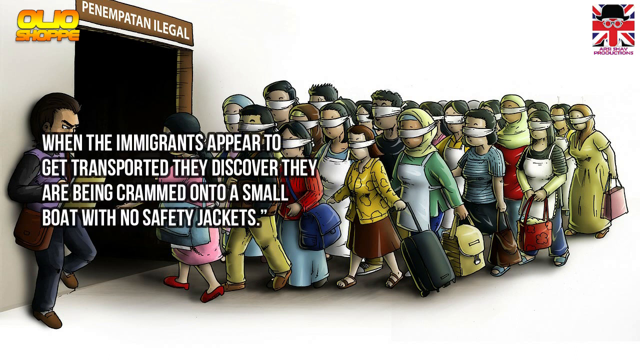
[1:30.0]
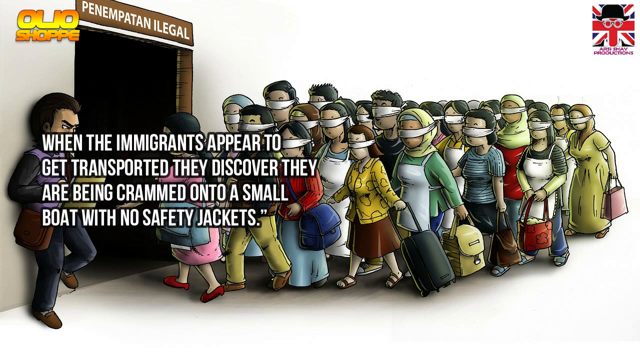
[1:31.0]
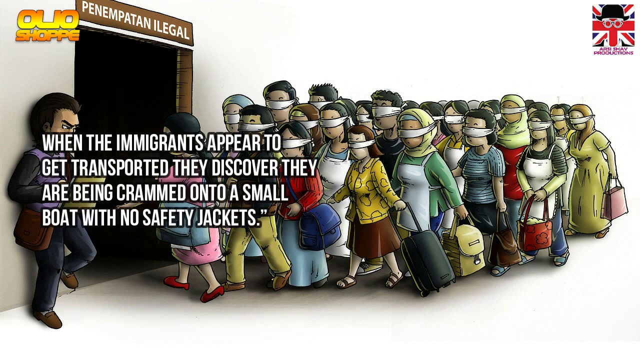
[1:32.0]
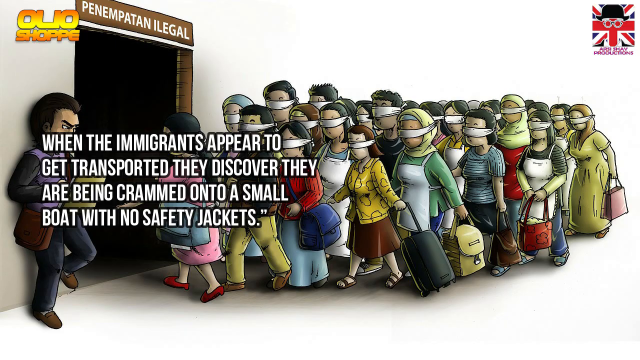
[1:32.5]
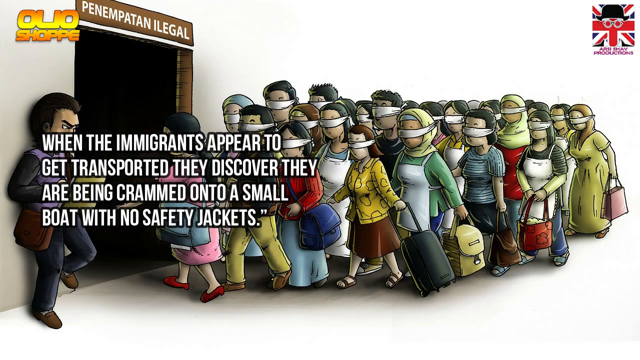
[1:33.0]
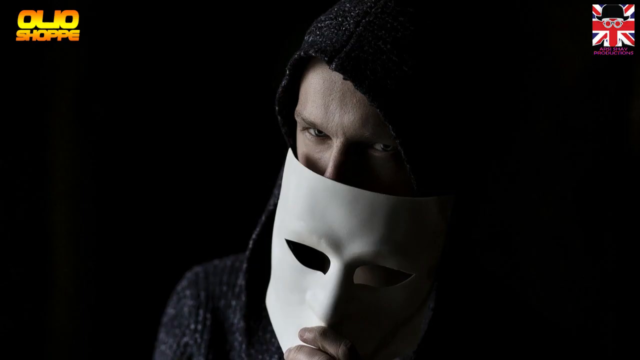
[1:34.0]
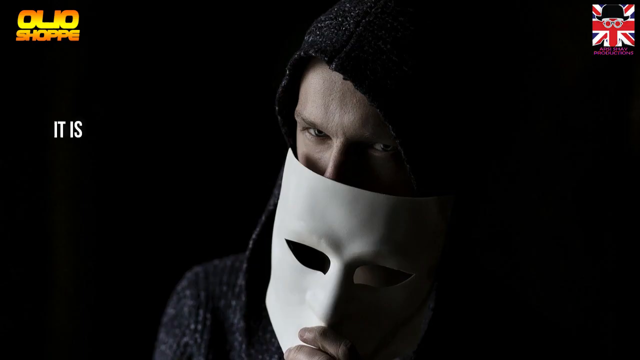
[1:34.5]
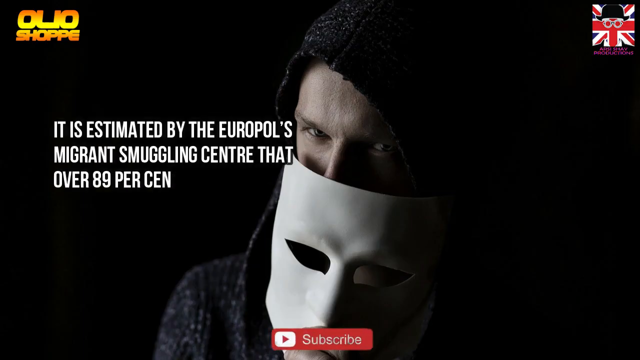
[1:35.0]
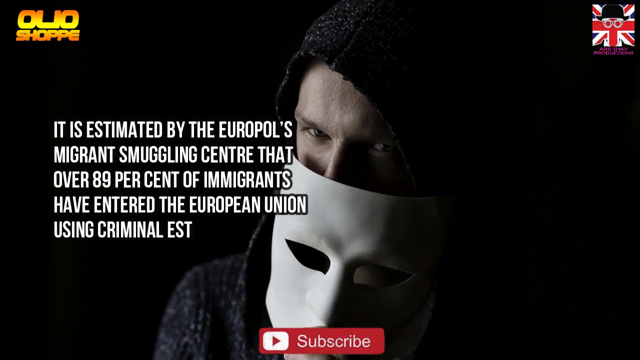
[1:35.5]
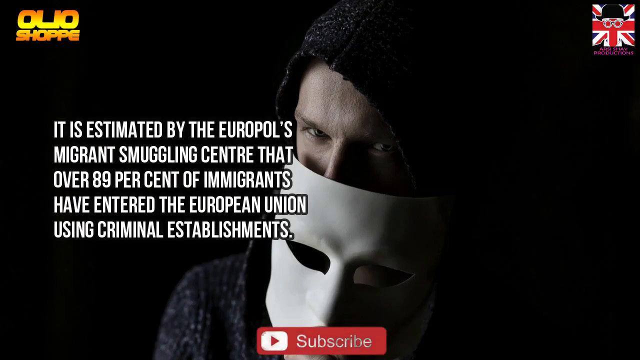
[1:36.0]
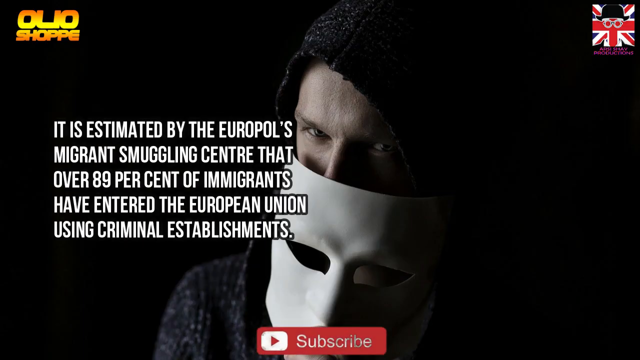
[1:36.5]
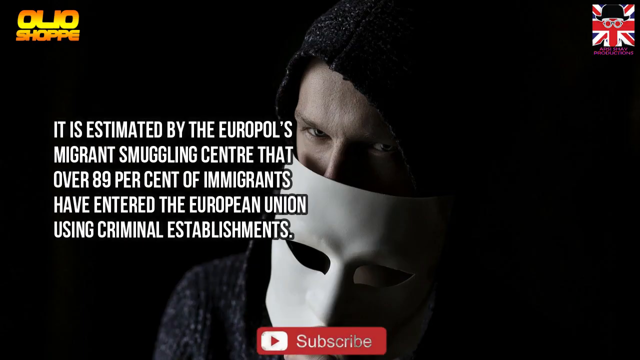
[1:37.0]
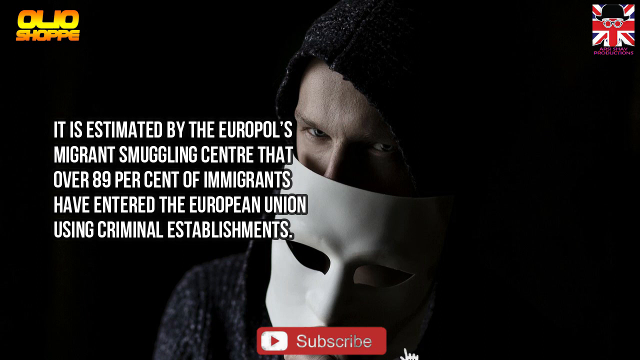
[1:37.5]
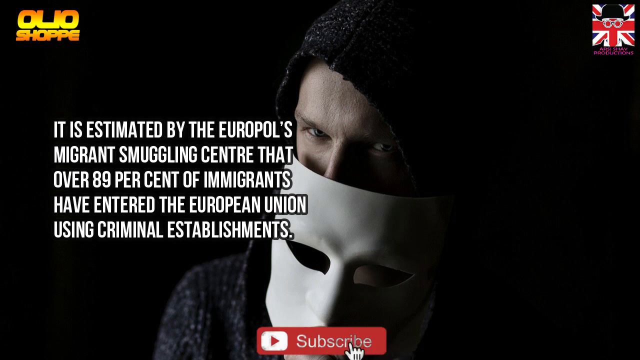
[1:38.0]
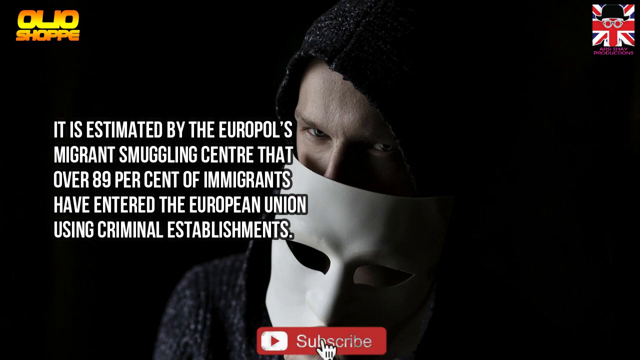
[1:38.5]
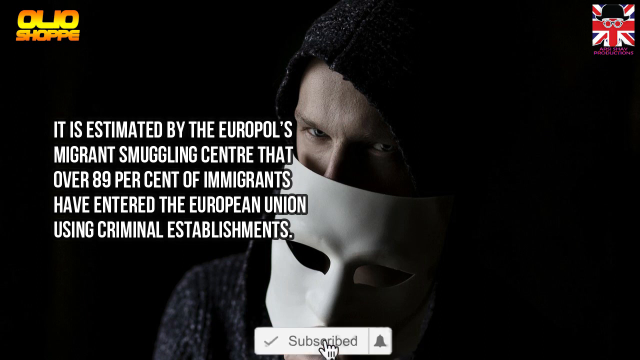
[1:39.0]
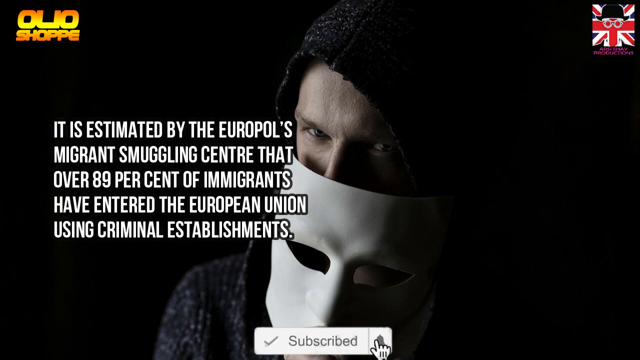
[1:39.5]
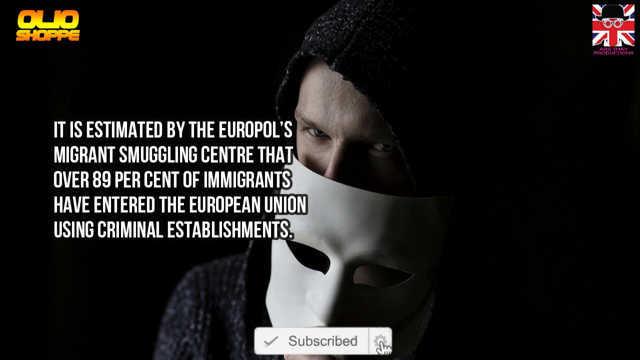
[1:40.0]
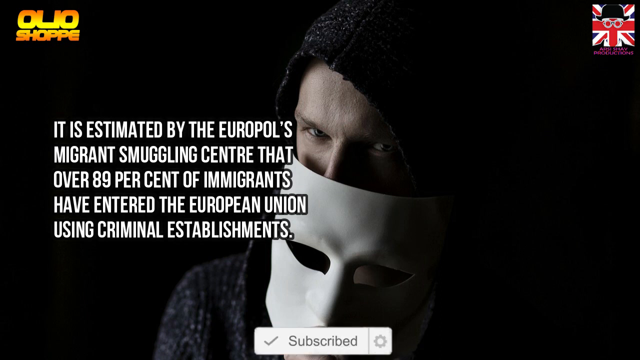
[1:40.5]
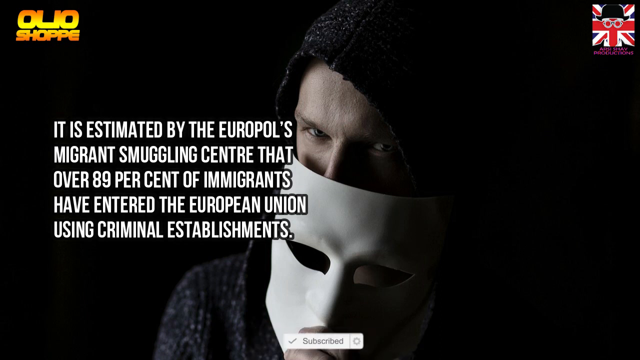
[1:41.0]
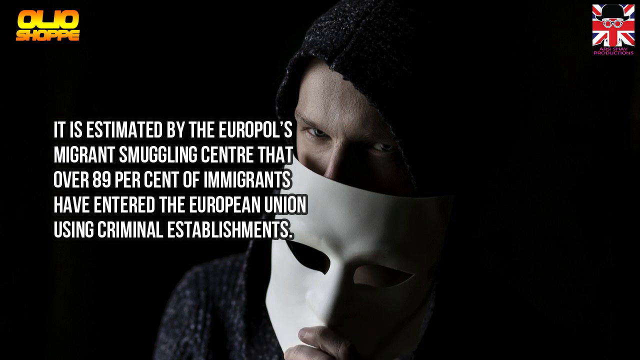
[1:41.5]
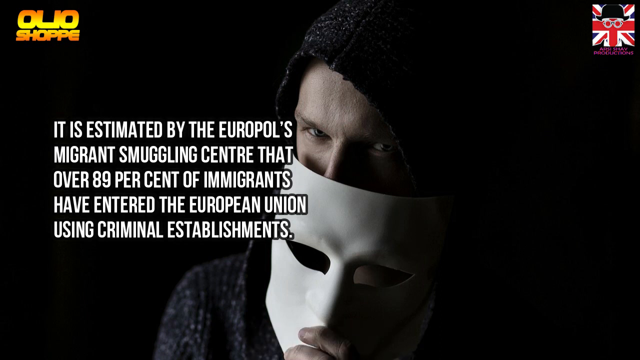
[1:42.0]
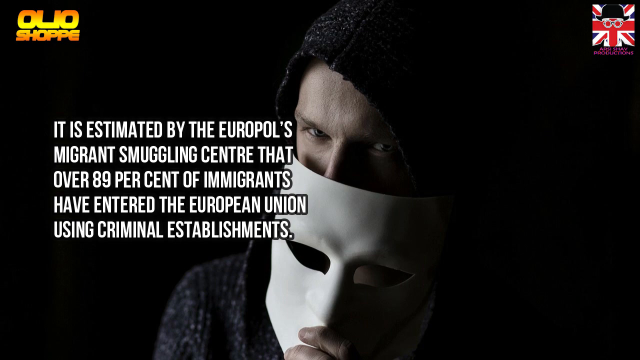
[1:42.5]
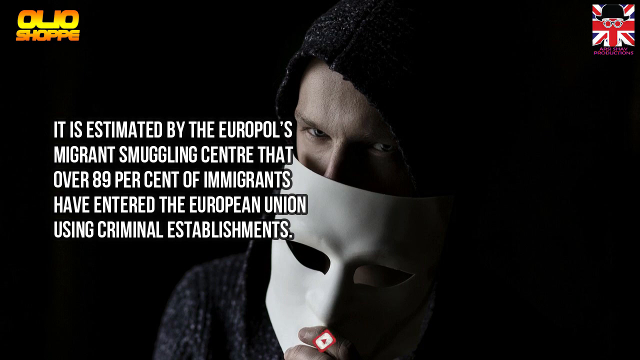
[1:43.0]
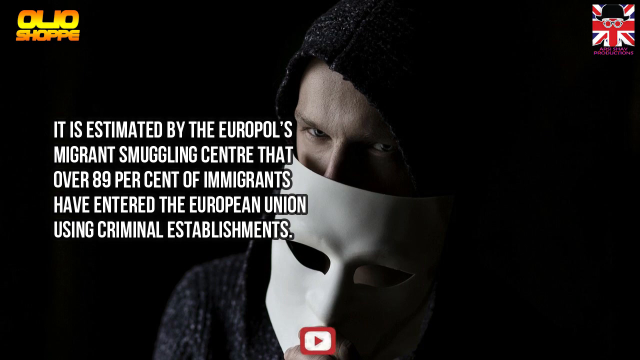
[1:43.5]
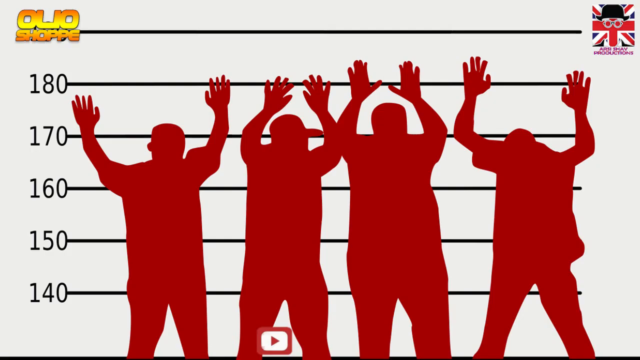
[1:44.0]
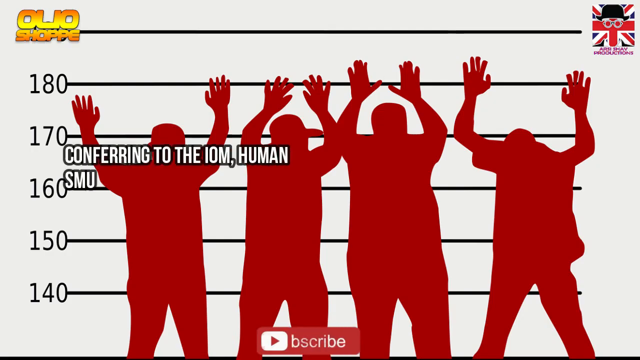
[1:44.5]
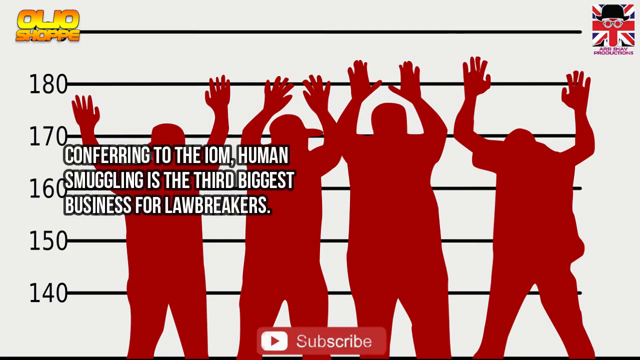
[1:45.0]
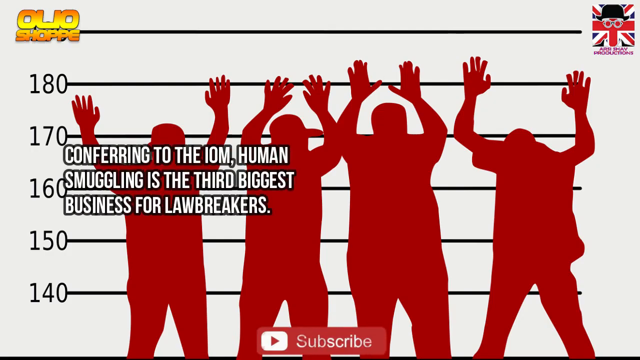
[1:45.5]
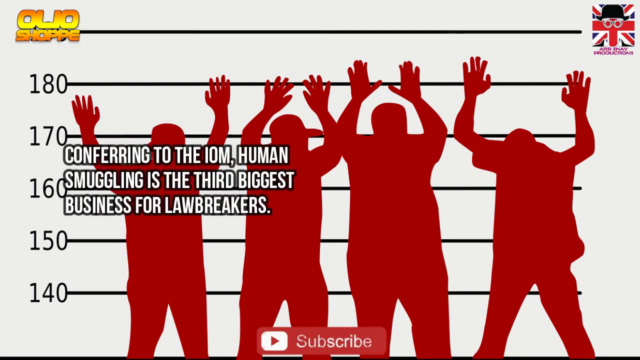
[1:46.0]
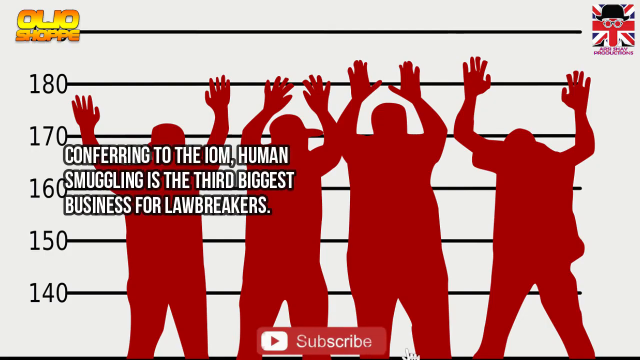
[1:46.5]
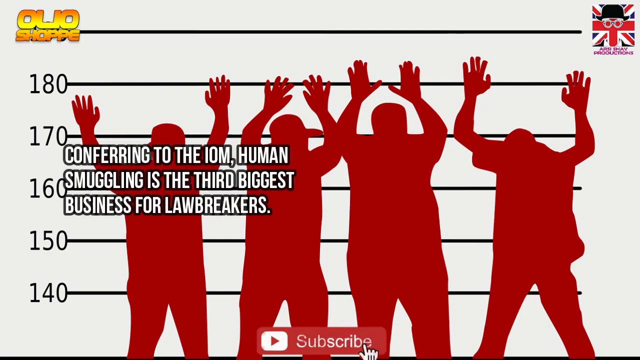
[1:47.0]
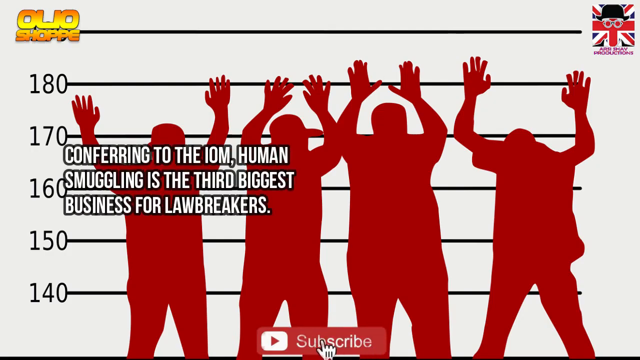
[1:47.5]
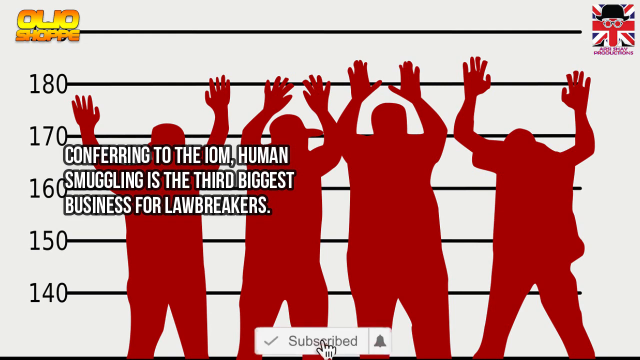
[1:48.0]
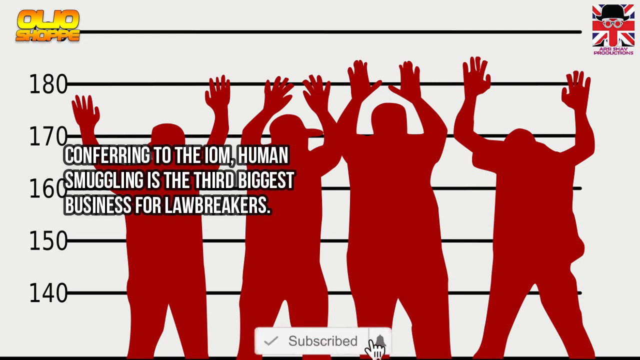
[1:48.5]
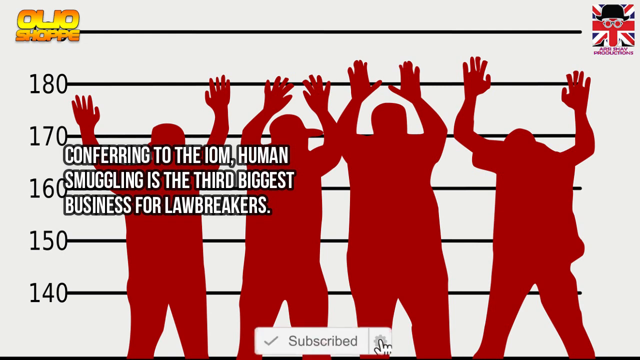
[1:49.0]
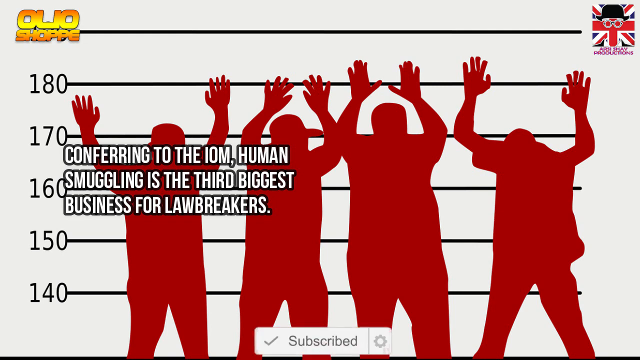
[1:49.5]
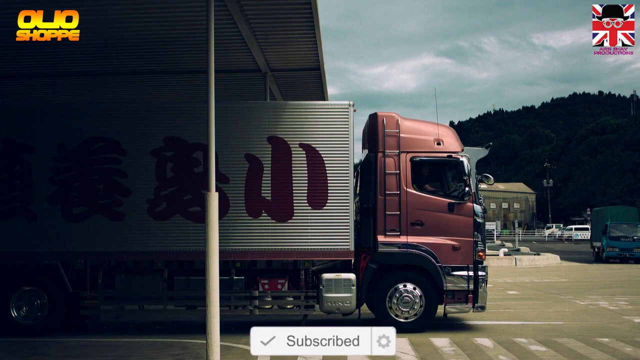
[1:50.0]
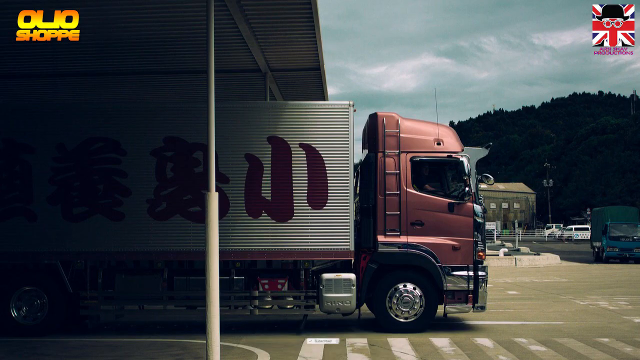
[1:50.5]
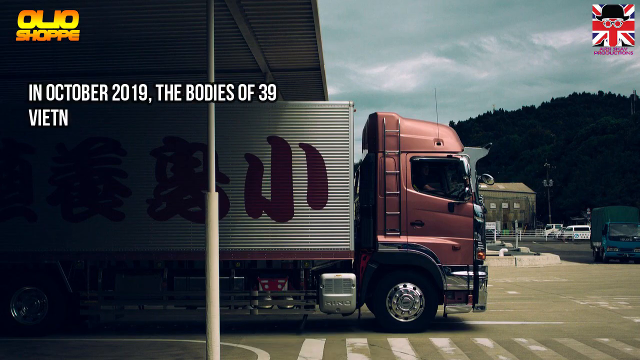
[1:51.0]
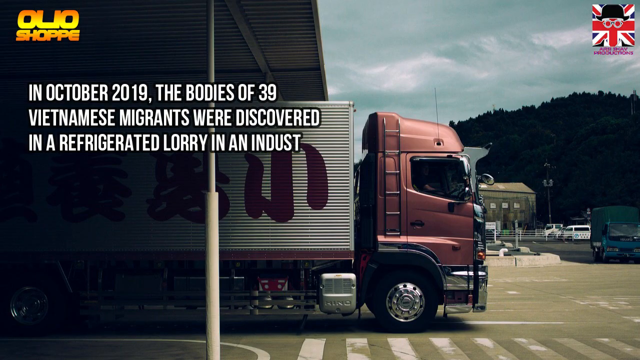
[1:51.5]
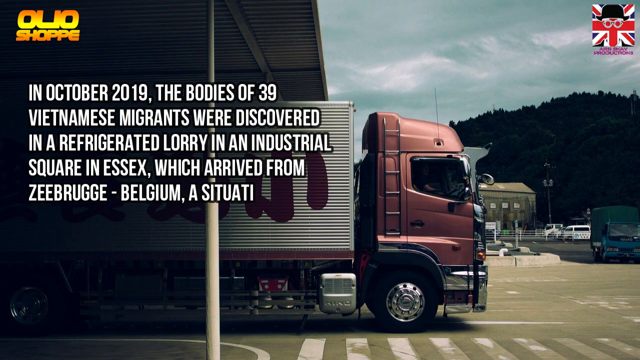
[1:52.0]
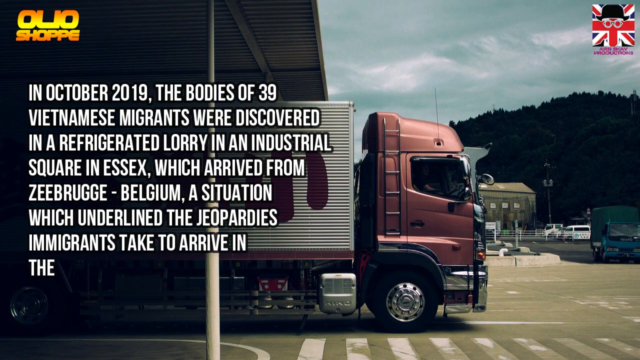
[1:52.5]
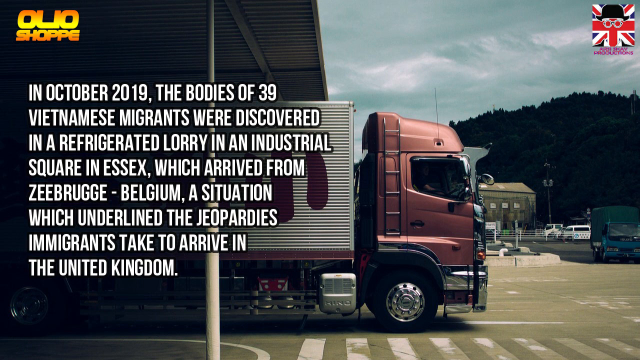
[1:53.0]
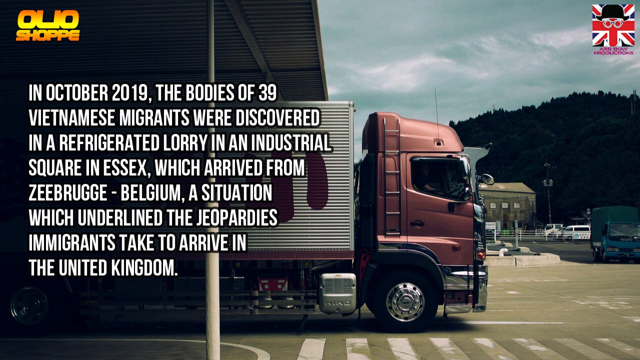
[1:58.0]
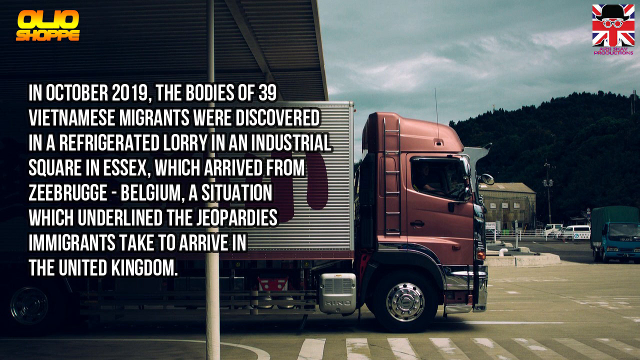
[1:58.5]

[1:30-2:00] A man who also looks kind of evil appears, wearing a black hood and a white mask, something like a drama mask, pulled down so his eyes are visible while it covers his mouth. White text on a black background reads "it is estimated by the Europol's migrant smuggling center that over 89 percent of immigrants have entered the European Union using criminal establishments." Next comes a lineup of four red silhouettes with their hands up, standing in front of five black horizontal lines labeled on the left from 140 up to 180, with white text reading "conferring to the IOM human smuggling is the third biggest business for lawbreakers." Then a large semi-truck with a copper, pinkish cab comes out of a large garage; it has red Chinese characters on its side. White text lined up on the left reads "in October 2019 the bodies of 39 Vietnamese migrants were discovered in a refrigerated lorry in an industrial square in Essex which arrived from Zeebrugge, Belgium a situation which underlined the jeopardies immigrants take to arrive in the United Kingdom."